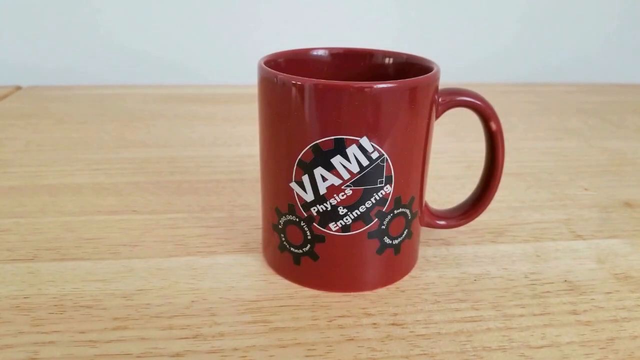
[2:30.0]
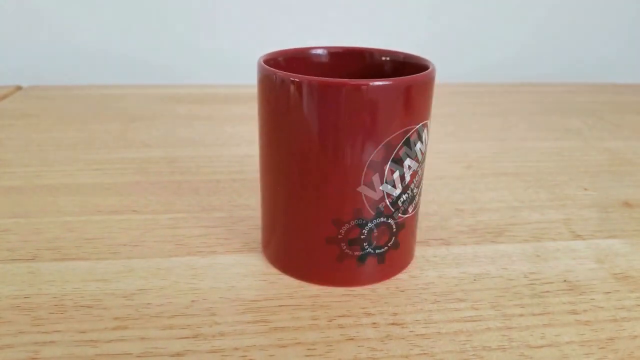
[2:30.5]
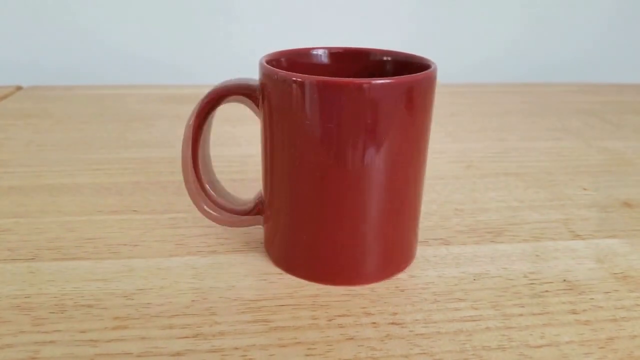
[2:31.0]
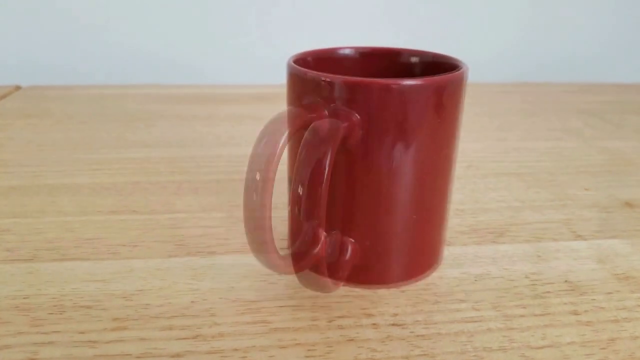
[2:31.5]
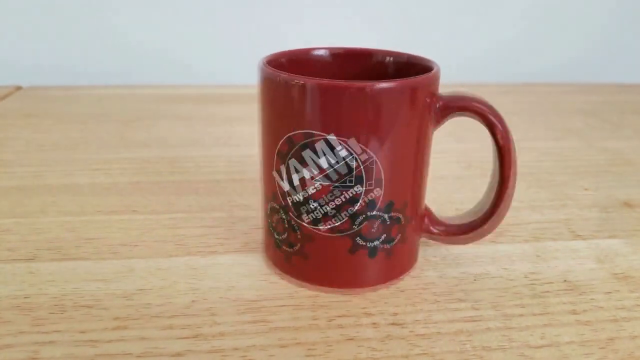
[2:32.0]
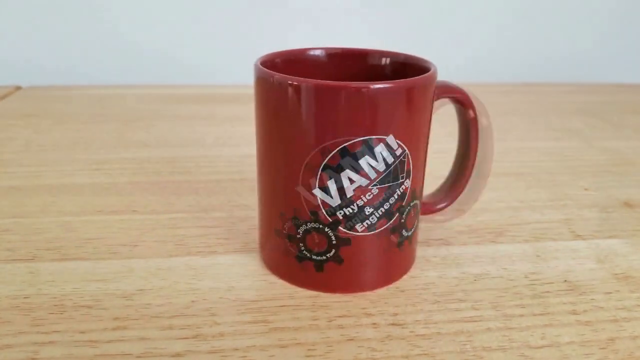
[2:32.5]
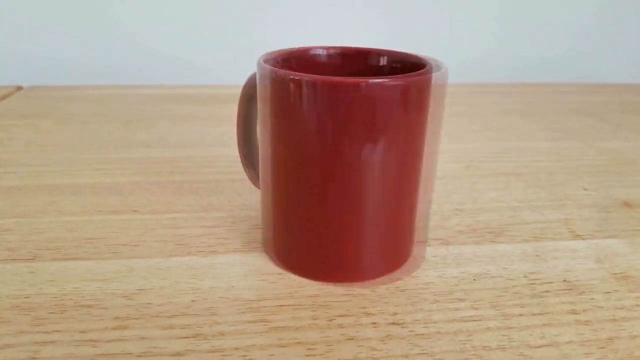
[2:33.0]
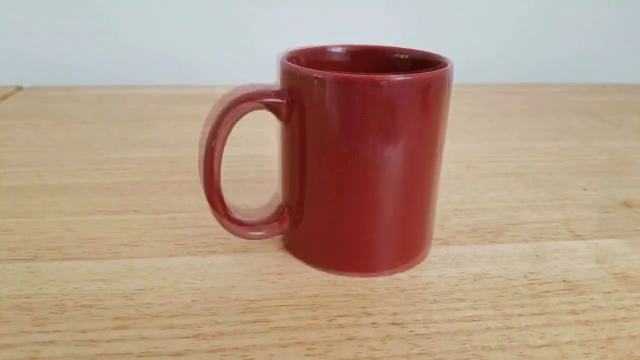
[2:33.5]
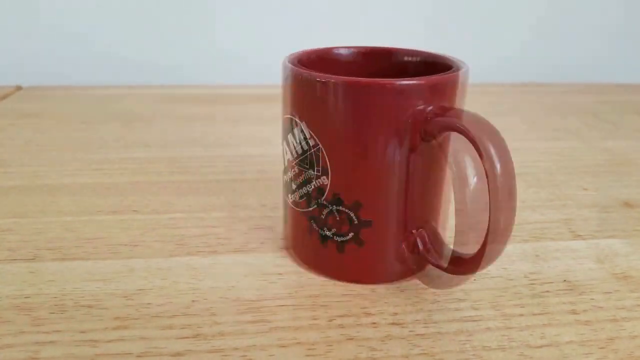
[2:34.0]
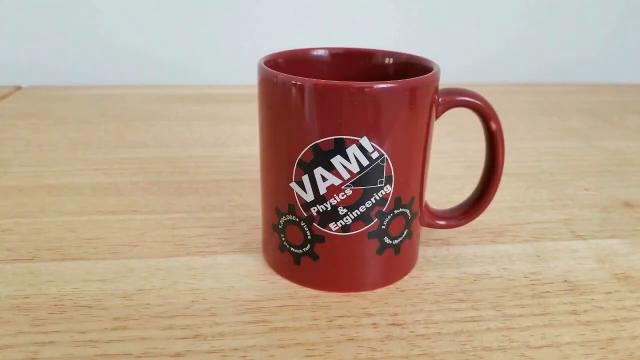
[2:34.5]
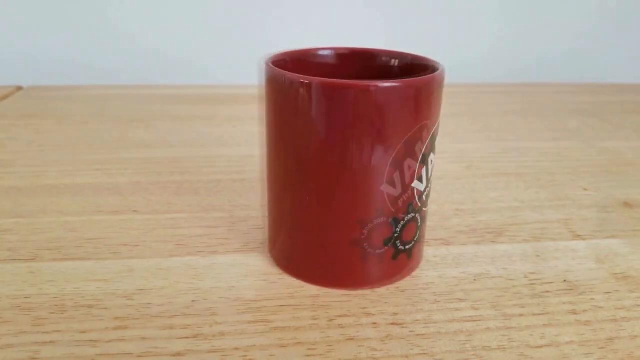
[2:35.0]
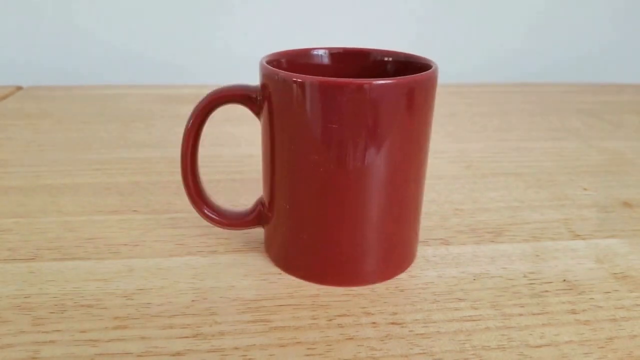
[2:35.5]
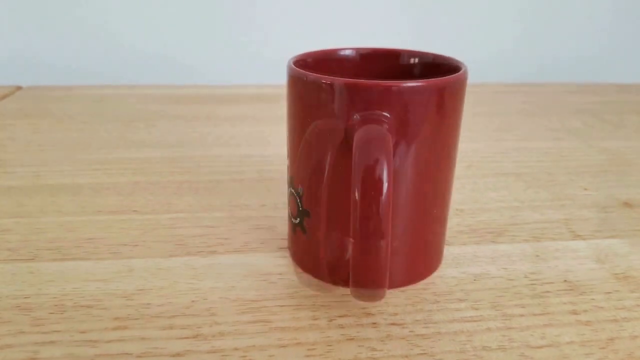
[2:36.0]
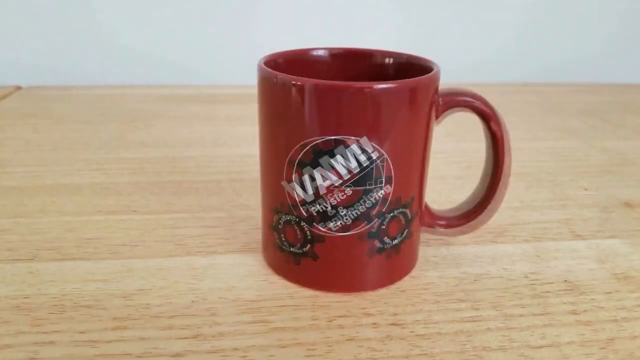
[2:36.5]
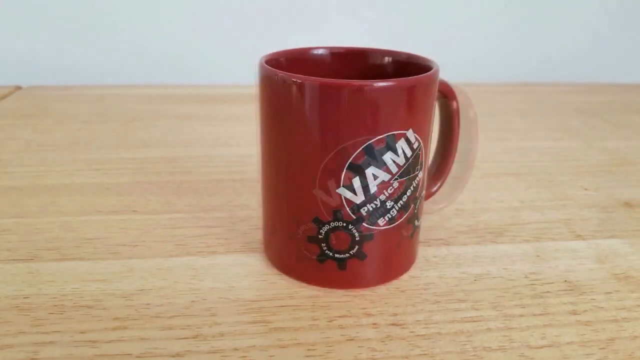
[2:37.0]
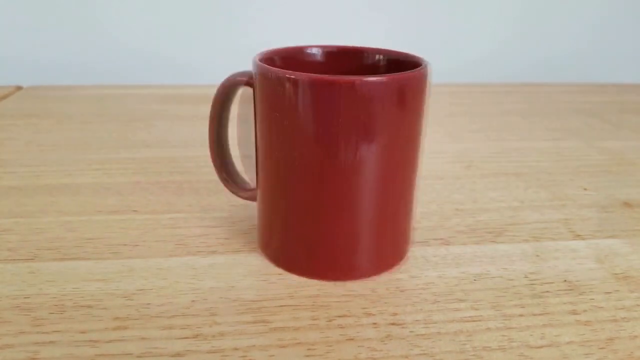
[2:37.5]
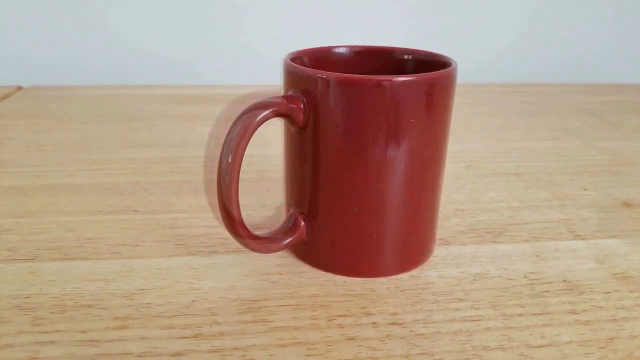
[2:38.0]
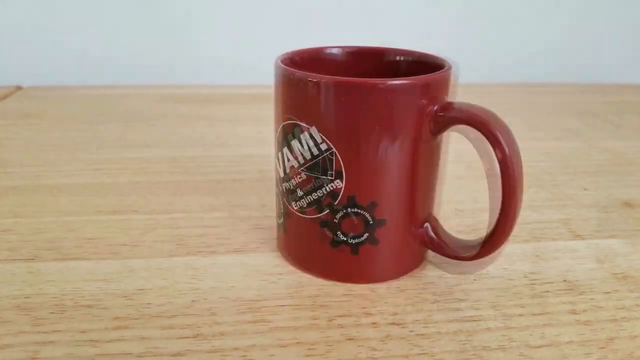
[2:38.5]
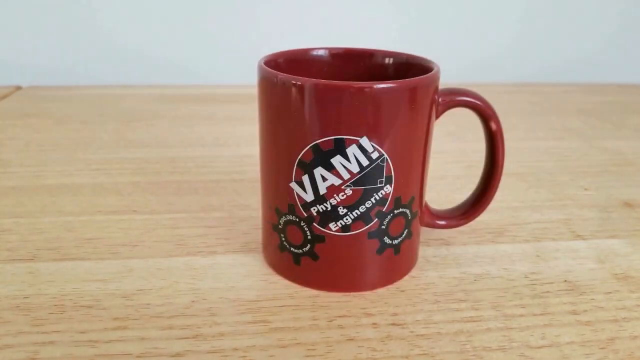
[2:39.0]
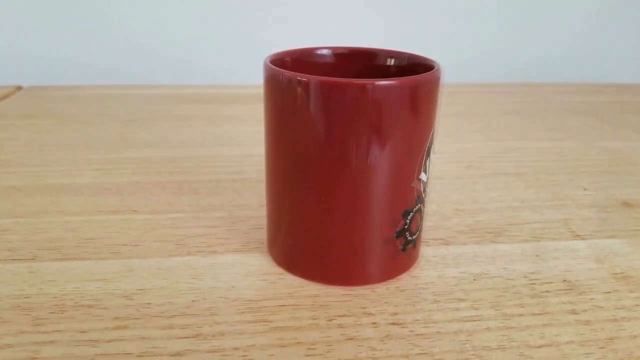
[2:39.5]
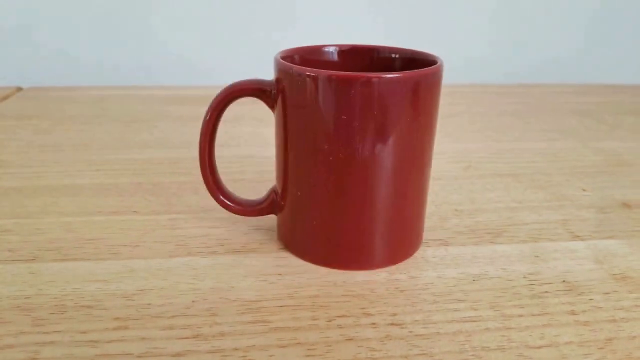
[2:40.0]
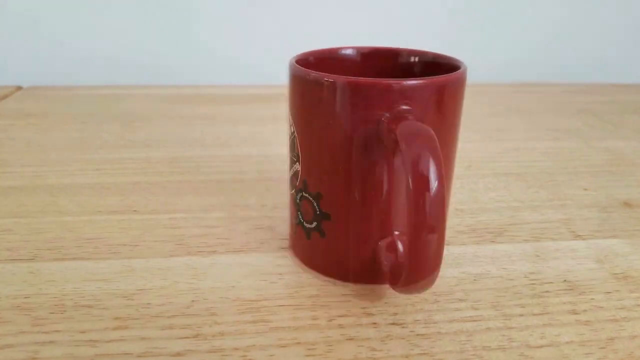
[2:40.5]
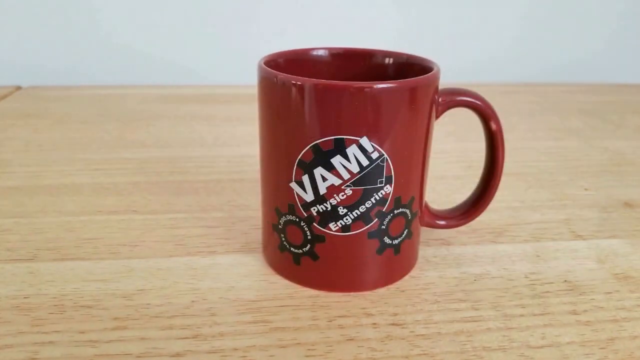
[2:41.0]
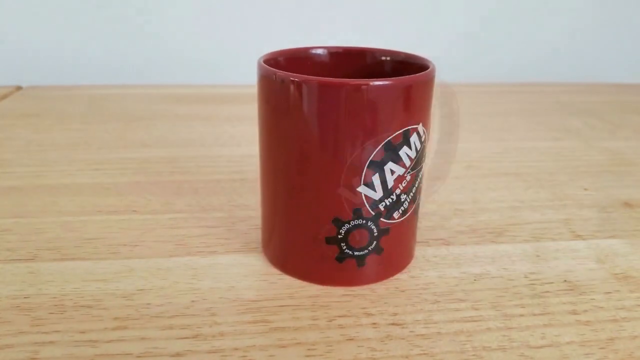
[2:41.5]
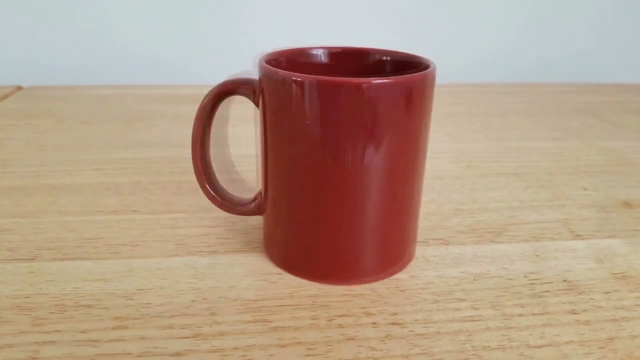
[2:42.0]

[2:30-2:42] The red mug comes into full view as it rotates into focus. On it is "VAM!" in all capital letters, with "Physics and Engineering" underneath. The logo has three black cogs or gears: "VAM Physics and Engineering" is in a larger gear in the center with a white circle around it, and the other two gears are in the lower left and lower right. The mug continues to rotate repeatedly on the wooden table.